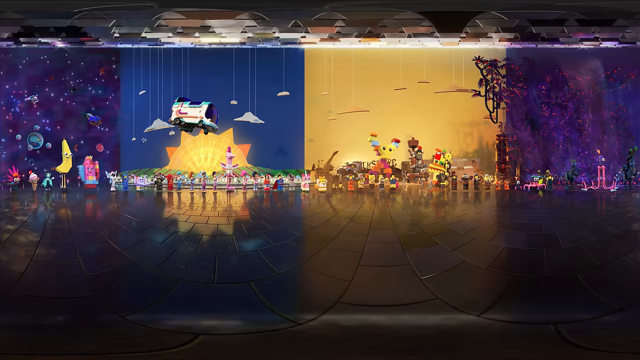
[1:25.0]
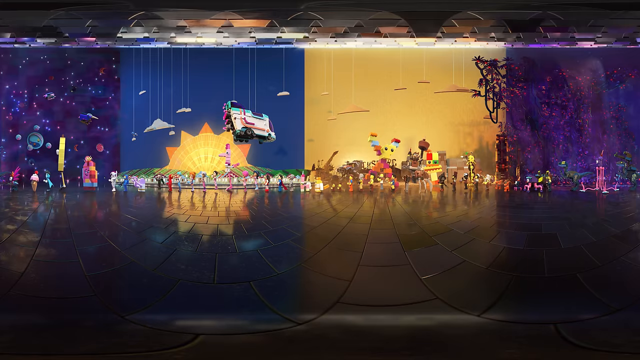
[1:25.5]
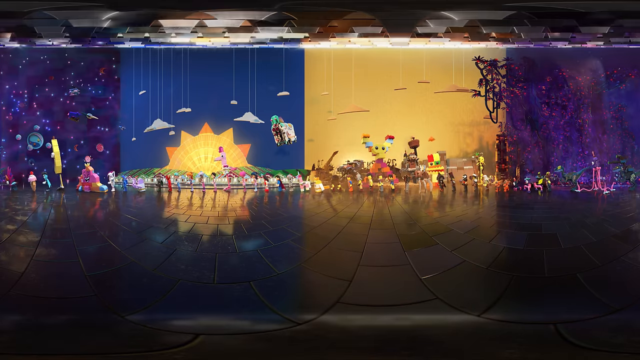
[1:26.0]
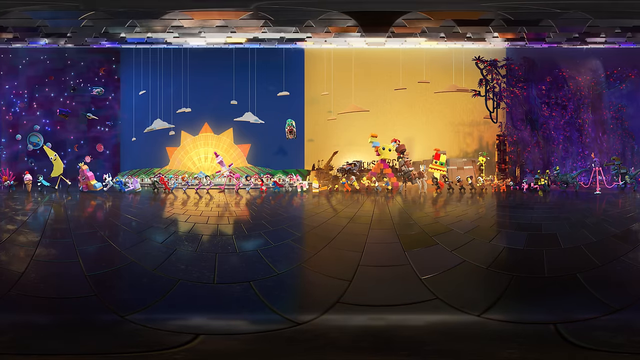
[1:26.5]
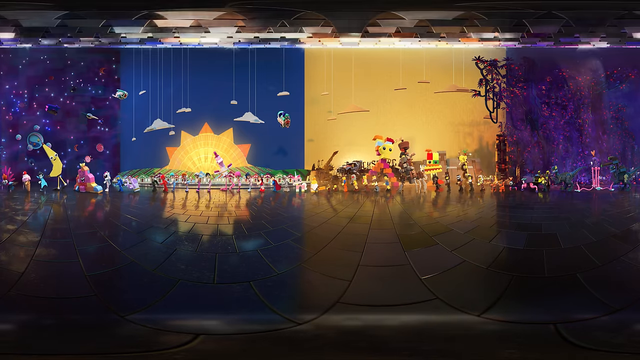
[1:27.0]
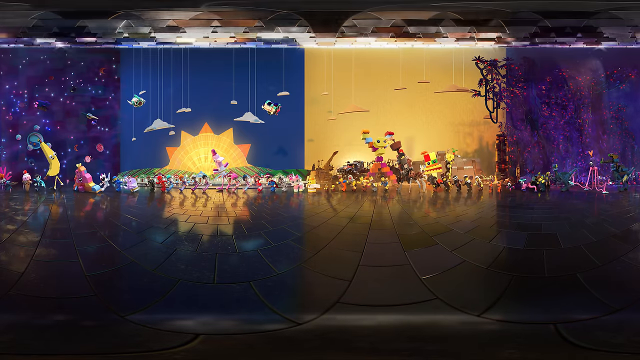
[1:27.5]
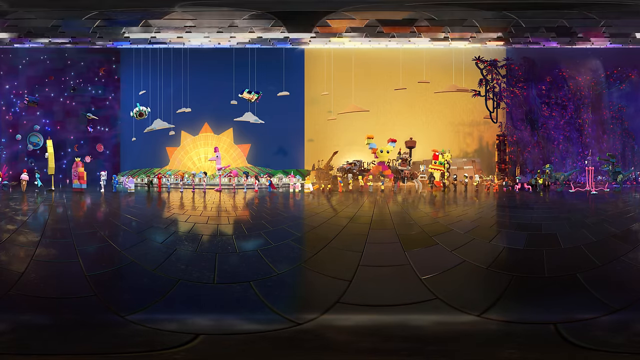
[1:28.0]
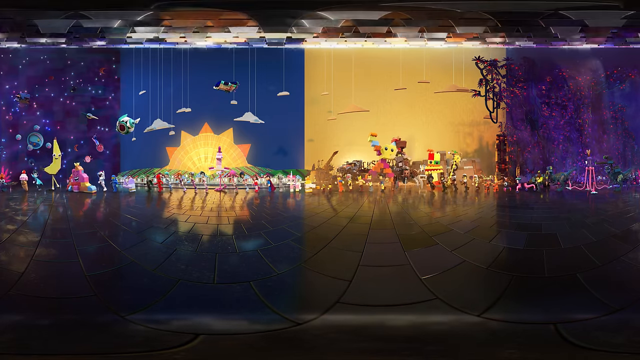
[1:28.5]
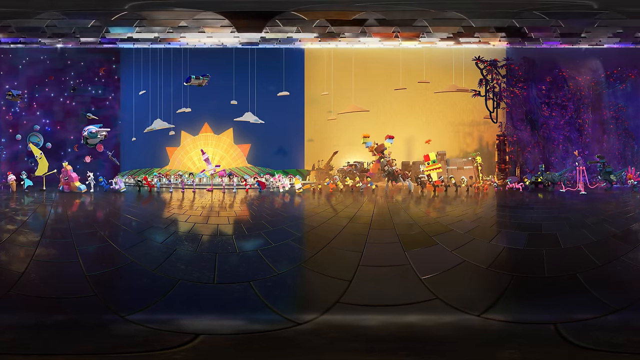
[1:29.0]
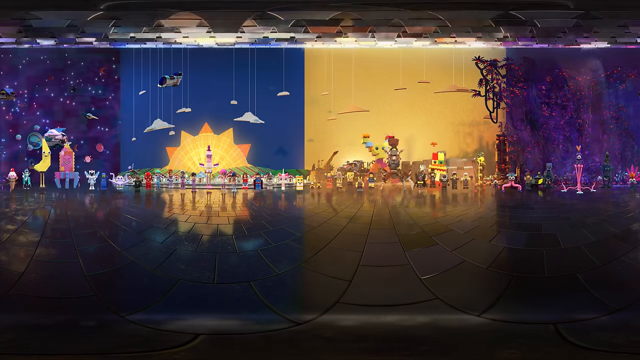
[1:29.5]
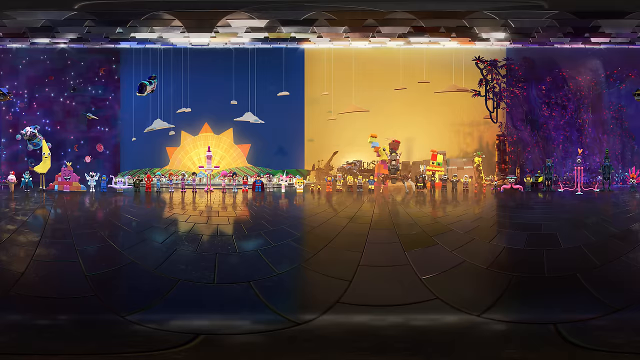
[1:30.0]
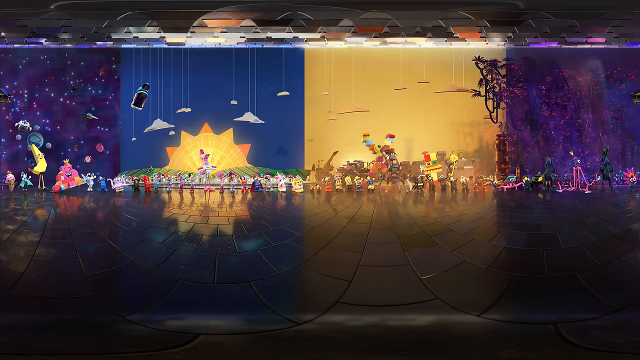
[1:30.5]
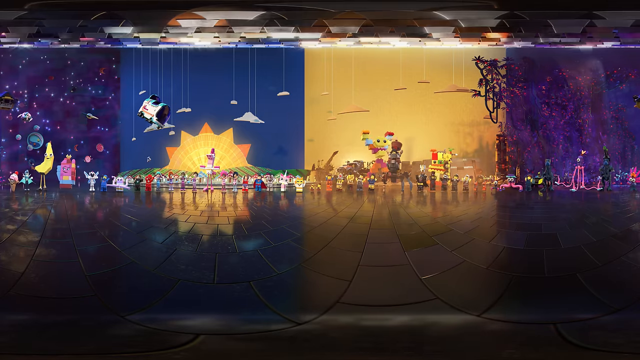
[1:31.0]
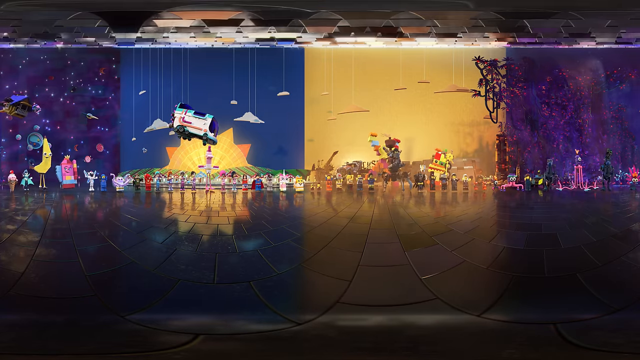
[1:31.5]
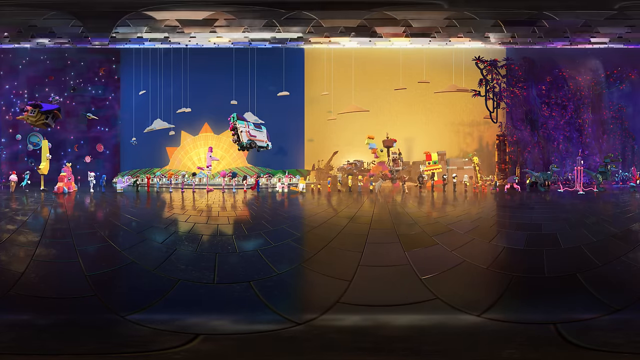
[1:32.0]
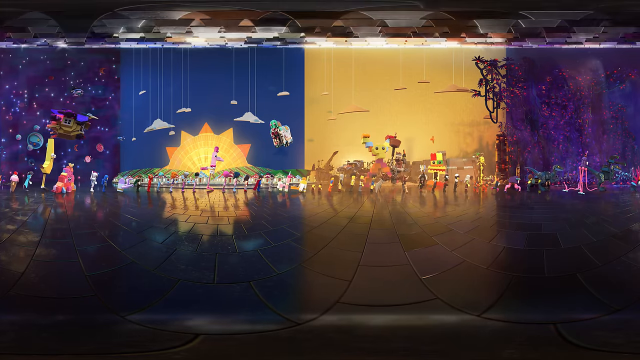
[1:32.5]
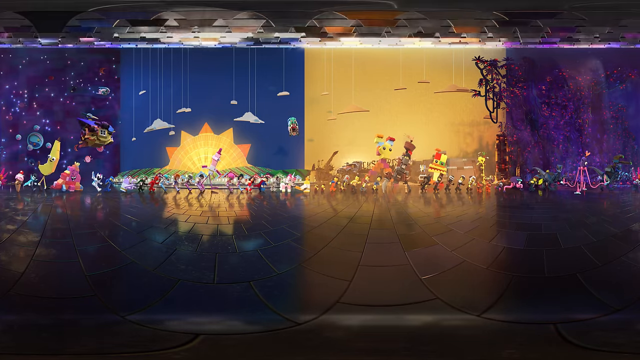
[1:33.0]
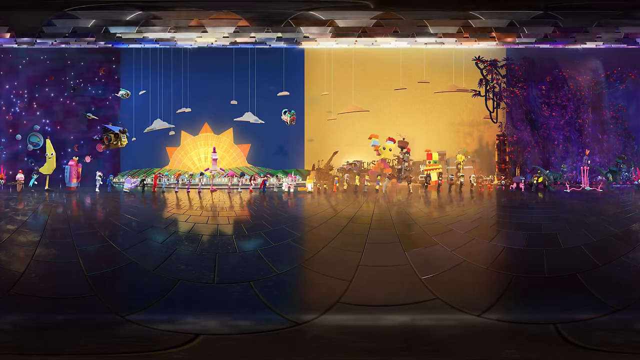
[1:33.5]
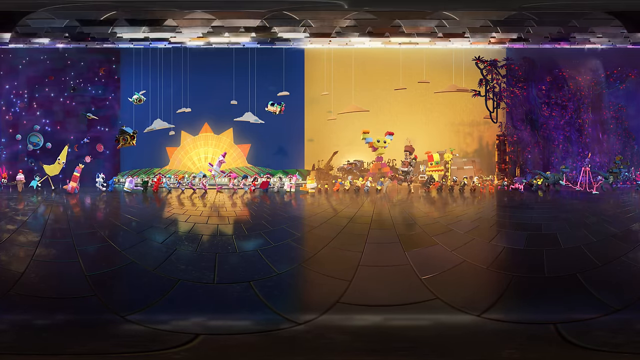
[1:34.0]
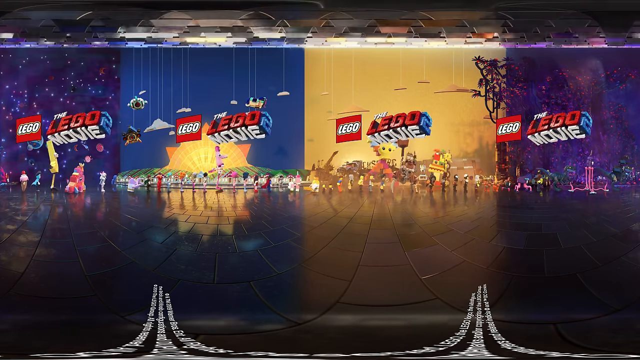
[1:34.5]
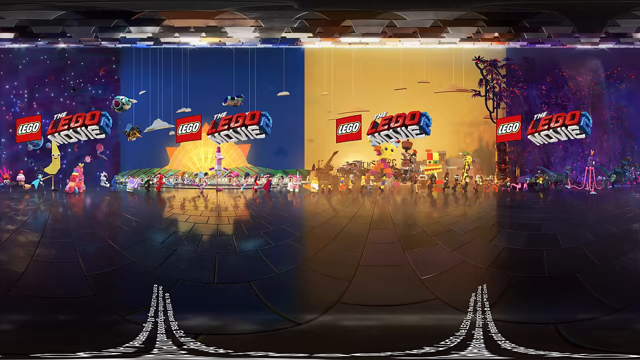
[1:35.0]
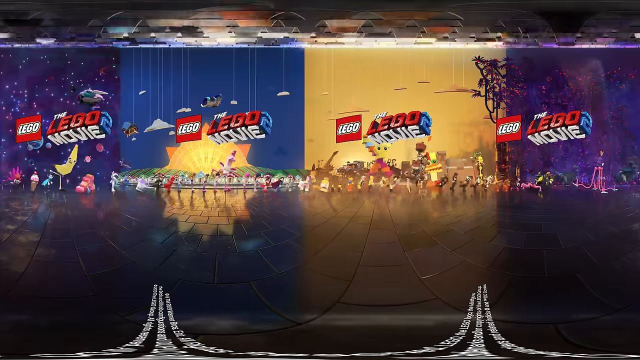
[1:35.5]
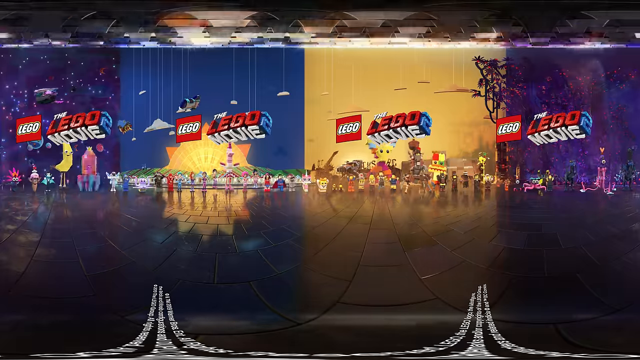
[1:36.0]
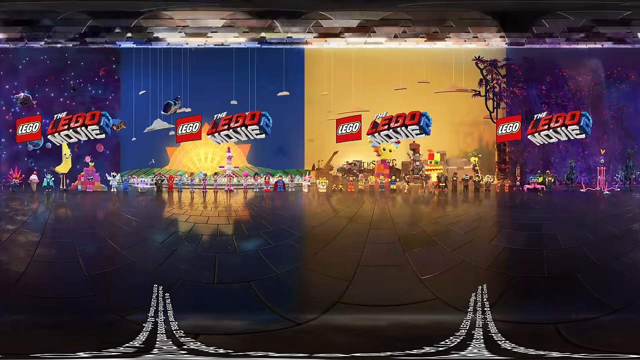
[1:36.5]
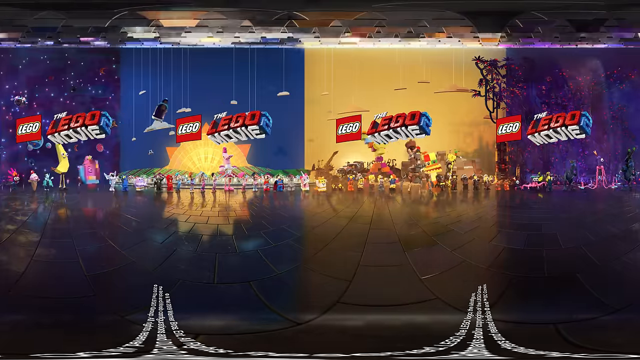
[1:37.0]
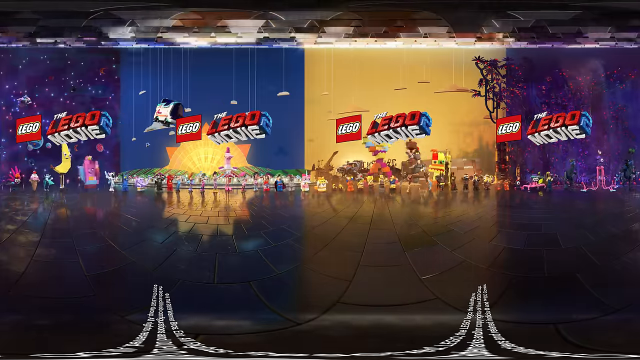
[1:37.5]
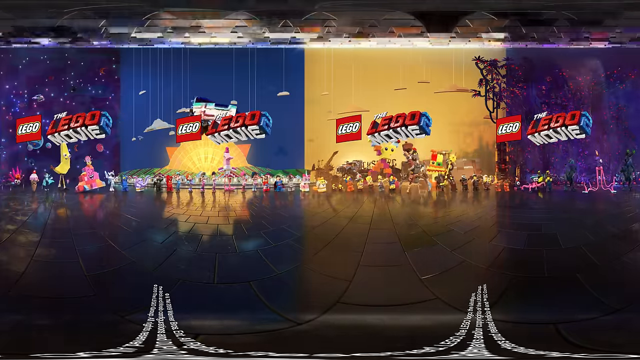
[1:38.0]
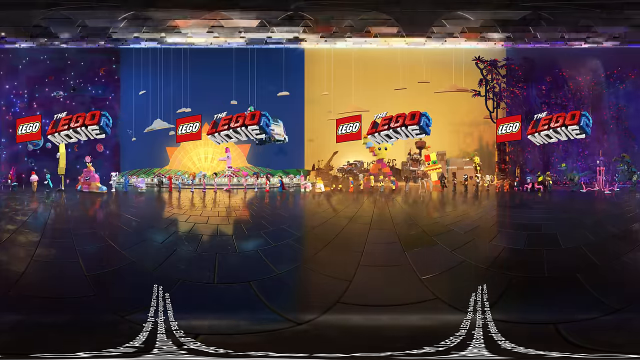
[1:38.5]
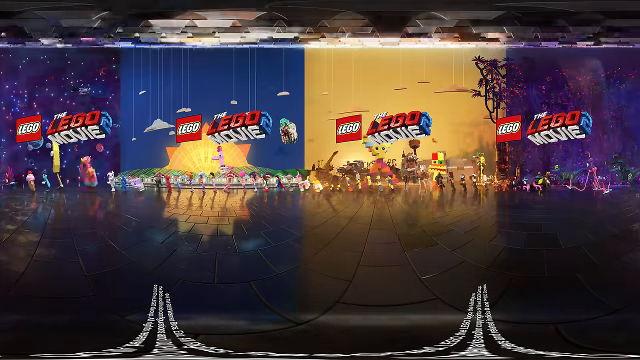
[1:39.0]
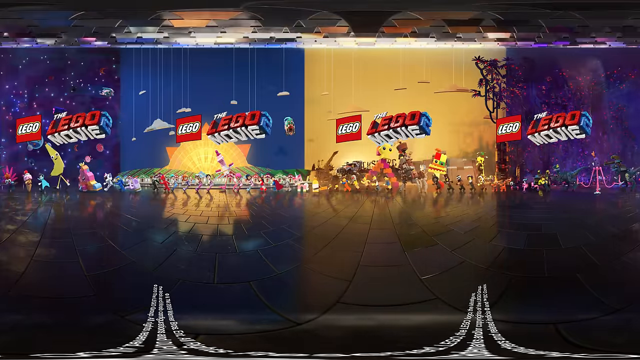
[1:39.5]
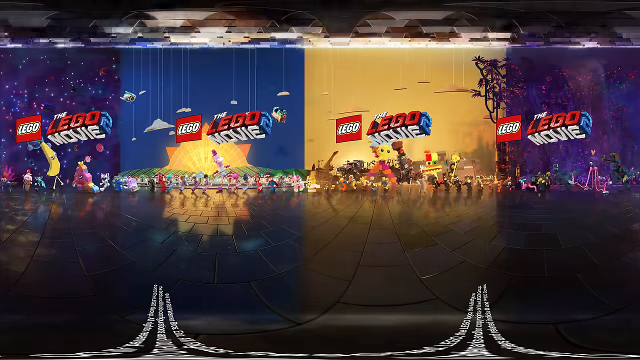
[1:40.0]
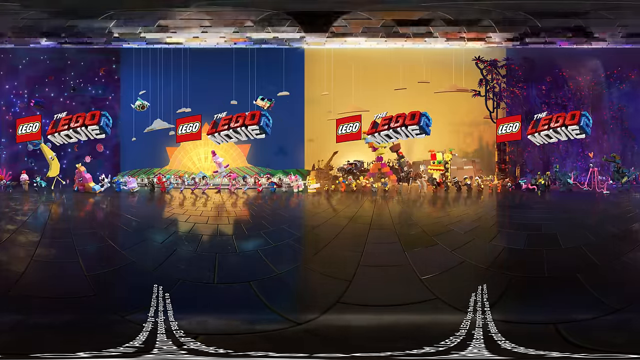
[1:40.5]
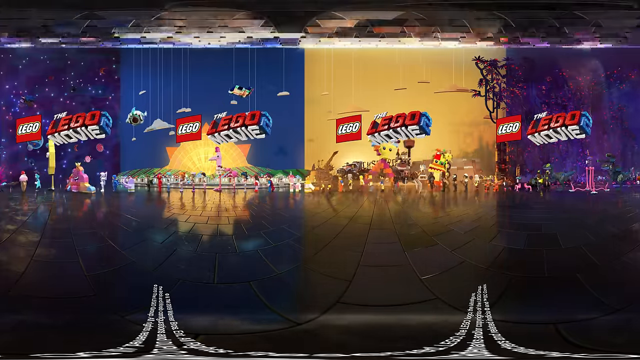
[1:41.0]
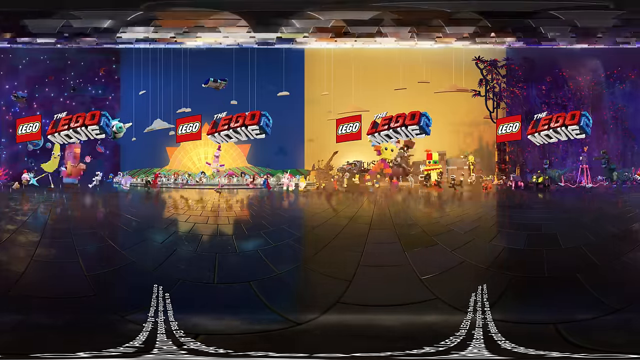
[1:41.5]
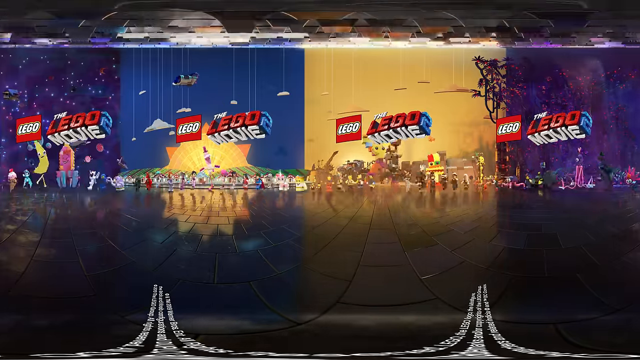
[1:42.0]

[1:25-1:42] The line dancing continues, with the large pink figurine at the left. All the figurines seem to be dancing as normal, and the overhead one goes through. The large colorful figurine behind the line shifts back and forth from its left foot to its right foot, sometimes crossing its legs and hands. At the end, writing pops up on the blue and yellow back walls. On the yellow wall there is a red classic Lego image and another 3D-type image that seems to maybe say "Lego movie", though not all of it can be read. On the left, an image has also popped up on the blue wall, and it looks like it also says "Lego movie".